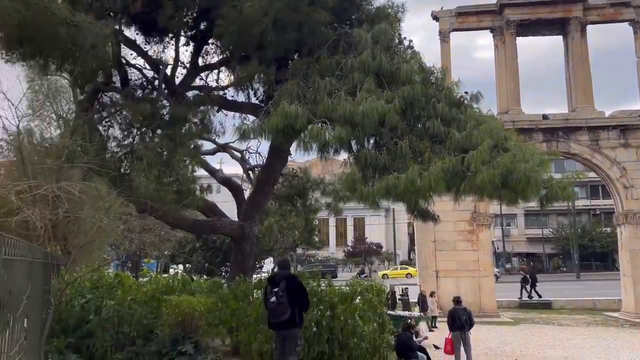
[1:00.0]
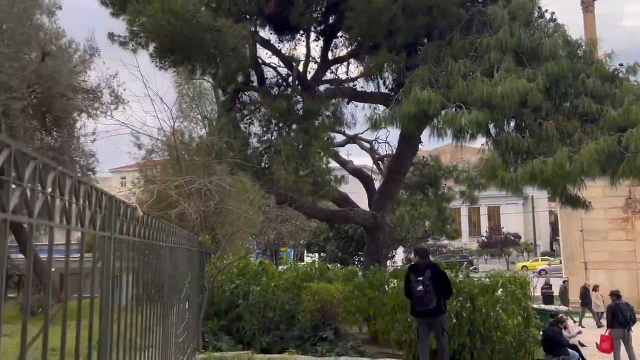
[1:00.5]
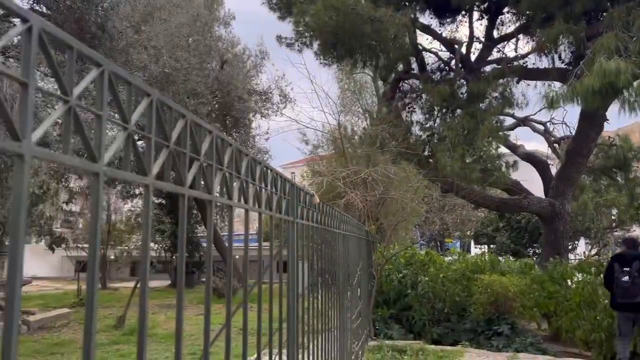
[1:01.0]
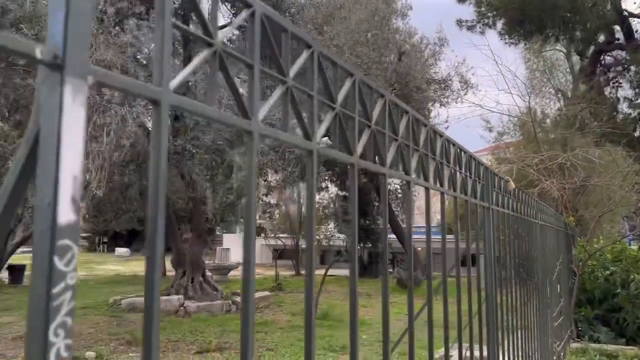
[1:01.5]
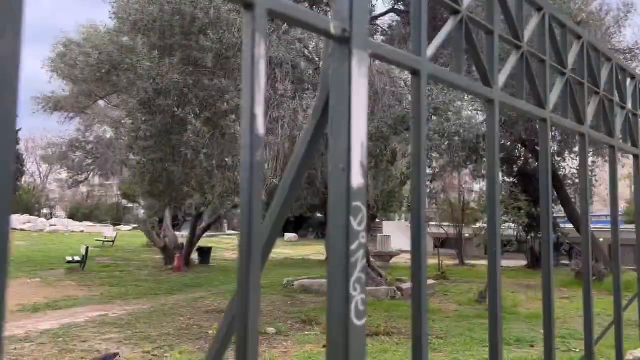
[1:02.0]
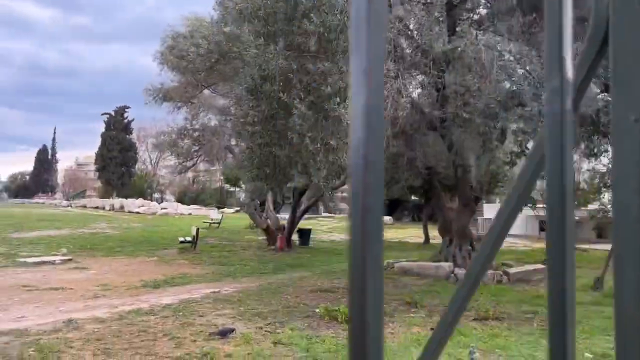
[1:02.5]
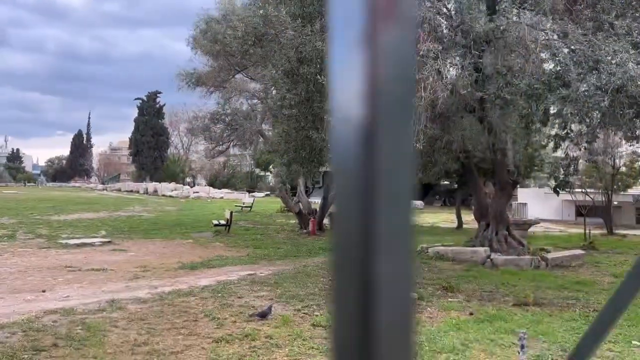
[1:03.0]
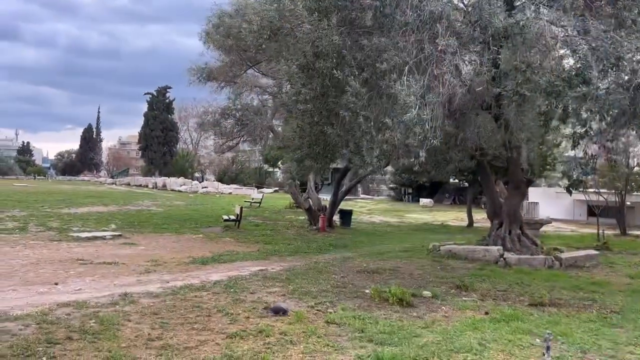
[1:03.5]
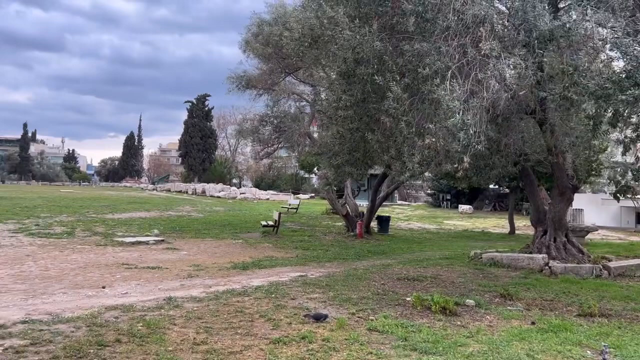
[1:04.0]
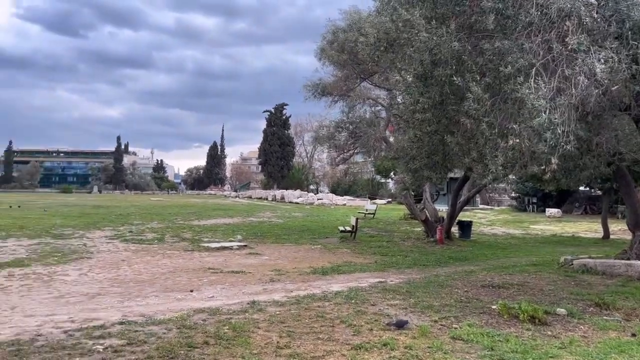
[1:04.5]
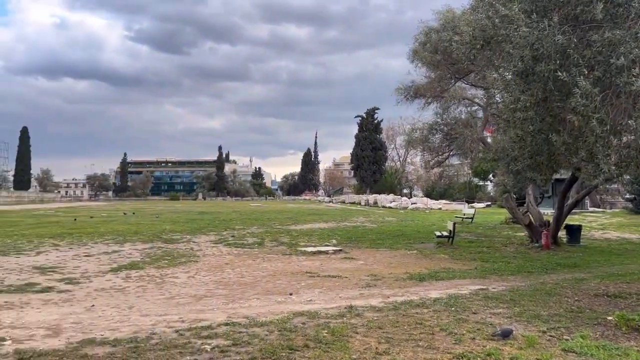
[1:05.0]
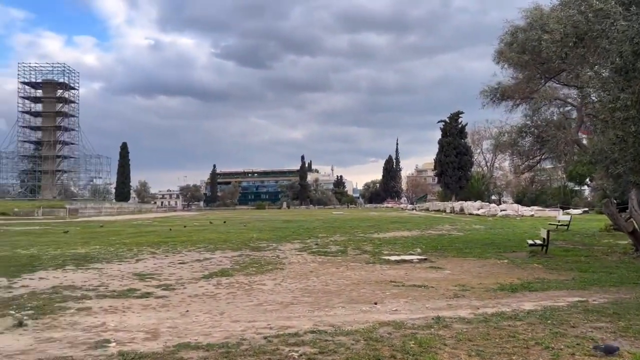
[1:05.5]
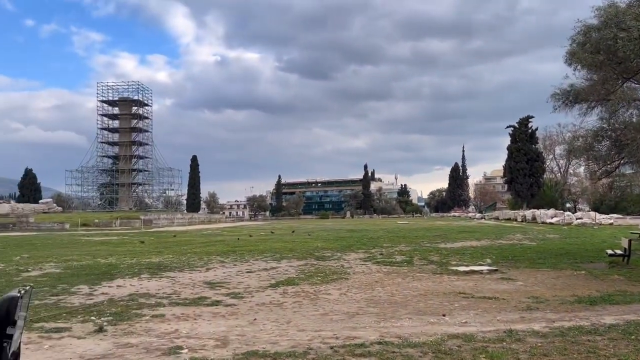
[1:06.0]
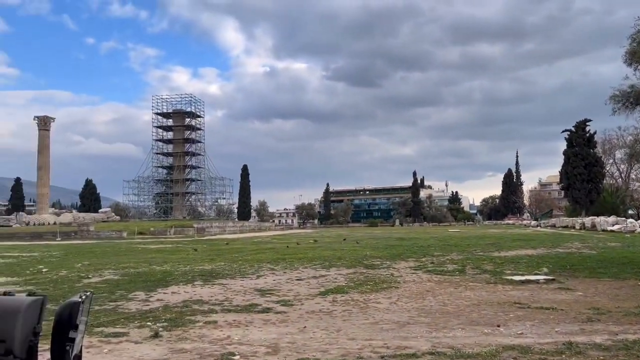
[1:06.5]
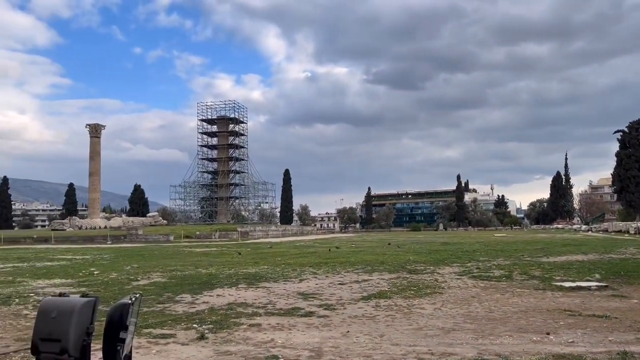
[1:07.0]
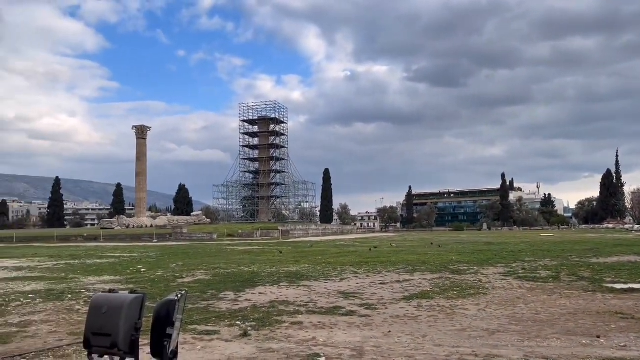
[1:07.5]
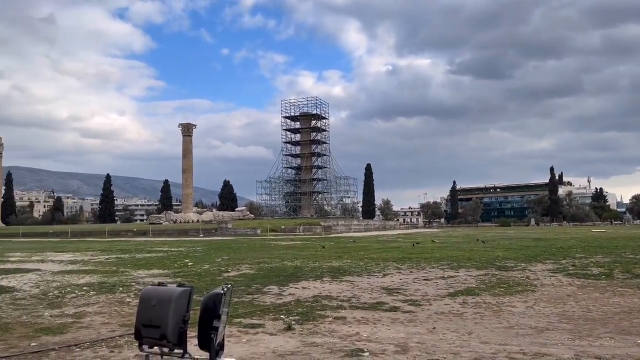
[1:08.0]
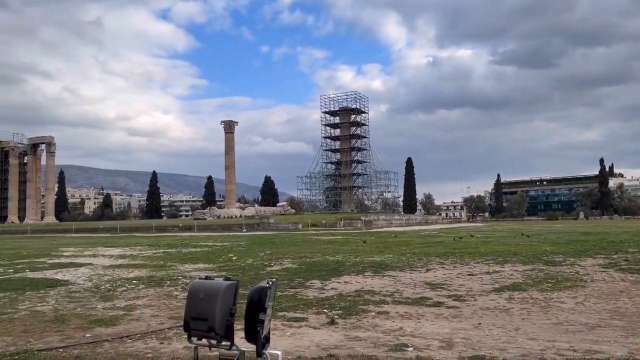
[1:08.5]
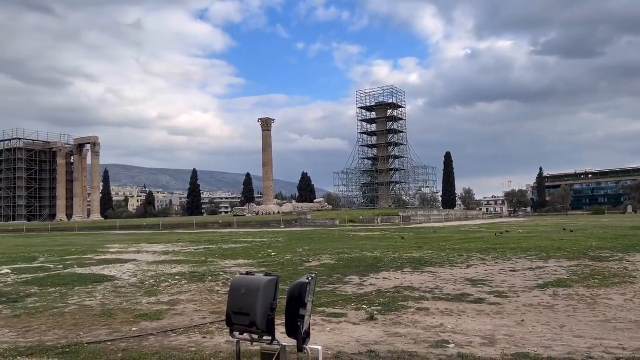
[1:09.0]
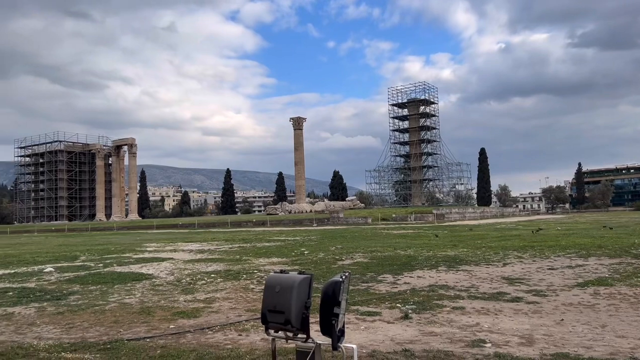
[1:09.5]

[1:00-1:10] The camera pans away from the gated ruin to show the other side of the park, which looks much more run-down. There is scaffolding, possibly around ruins that are being preserved or restored. Columns stand by themselves in the middle of a field, with scaffolding surrounding some of them, all seen from a distance, with some trees around these few columns. Two columns are sitting alone, one with scaffolding, and off to the side is a clump of three or four columns with a lot of scaffolding next to them.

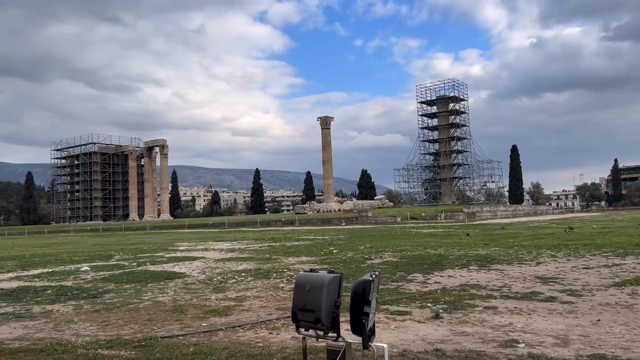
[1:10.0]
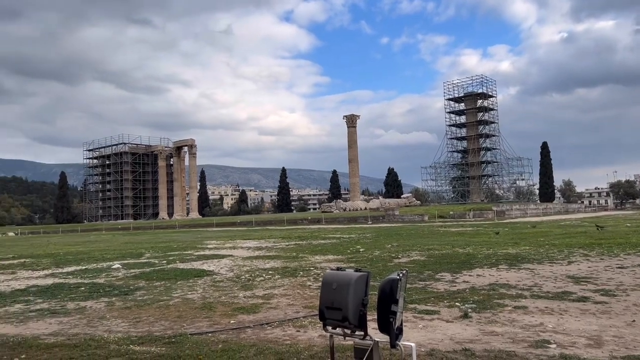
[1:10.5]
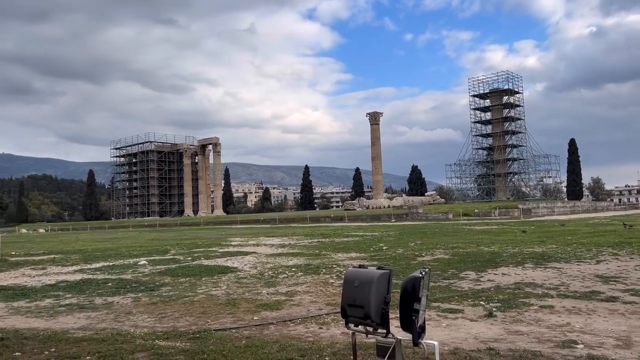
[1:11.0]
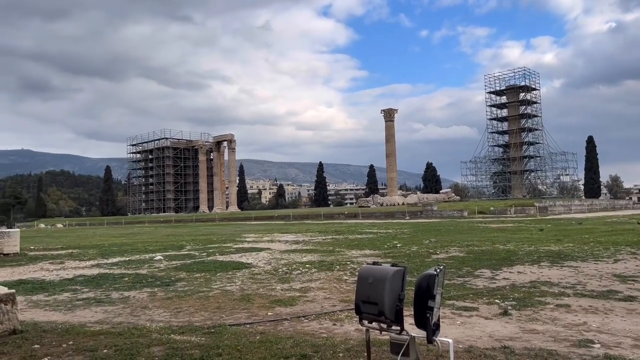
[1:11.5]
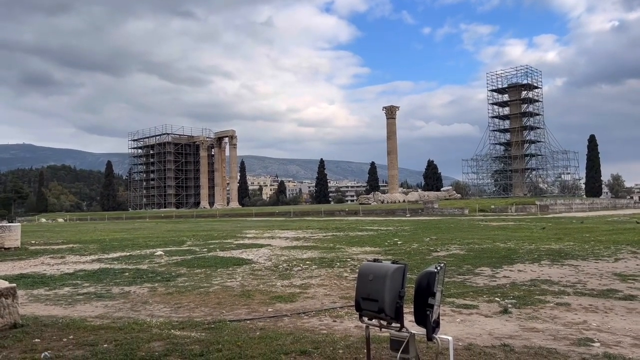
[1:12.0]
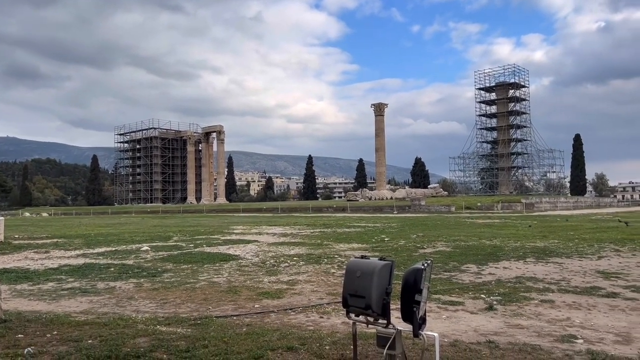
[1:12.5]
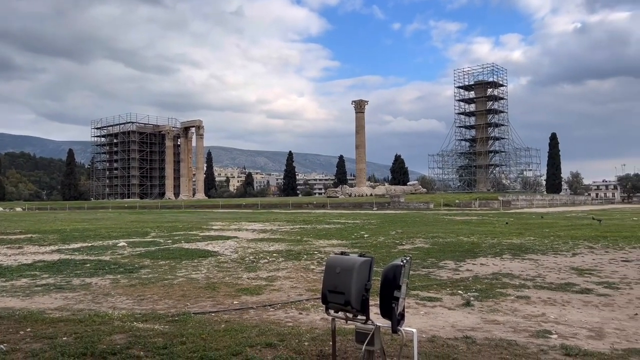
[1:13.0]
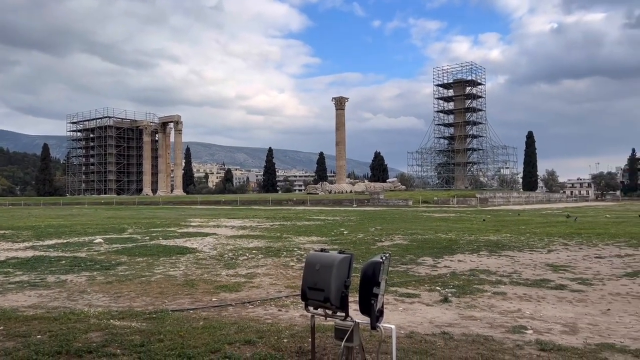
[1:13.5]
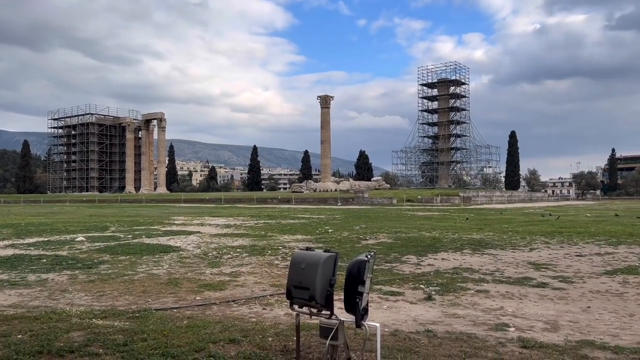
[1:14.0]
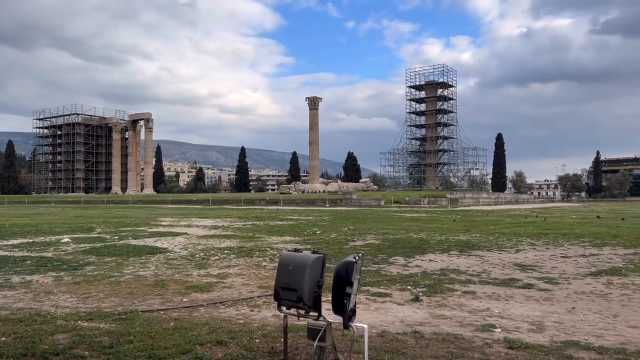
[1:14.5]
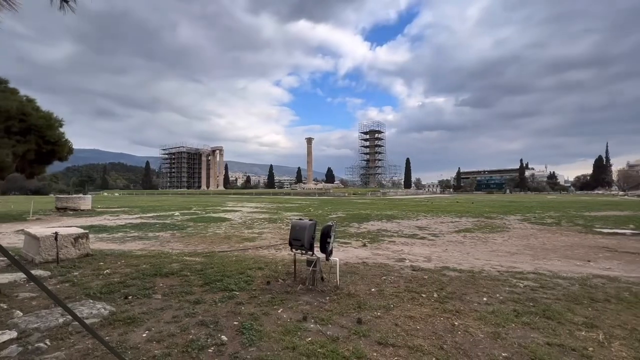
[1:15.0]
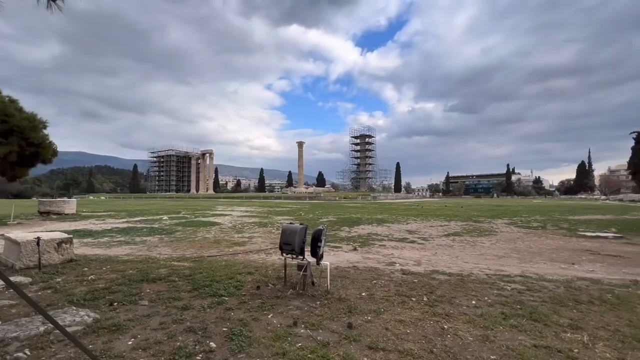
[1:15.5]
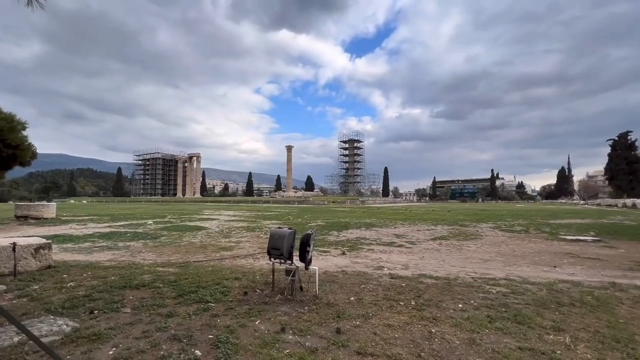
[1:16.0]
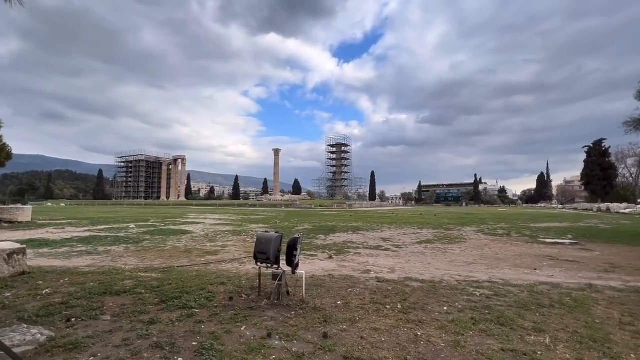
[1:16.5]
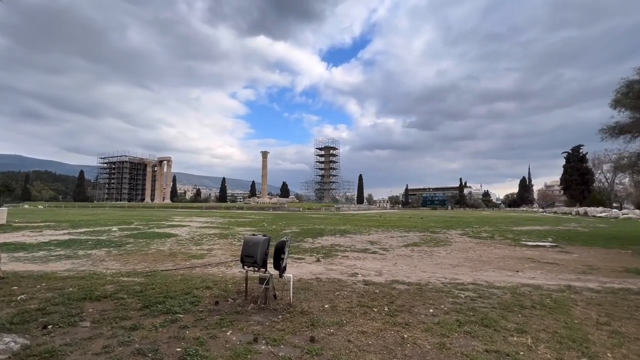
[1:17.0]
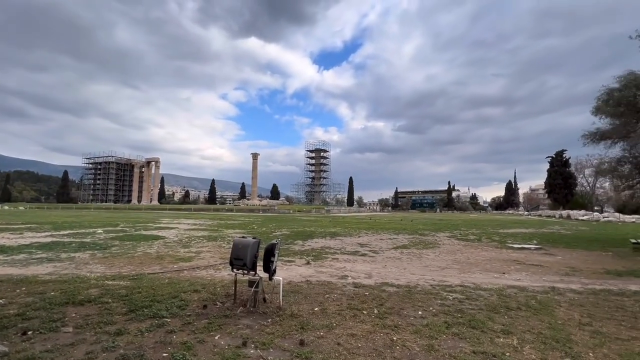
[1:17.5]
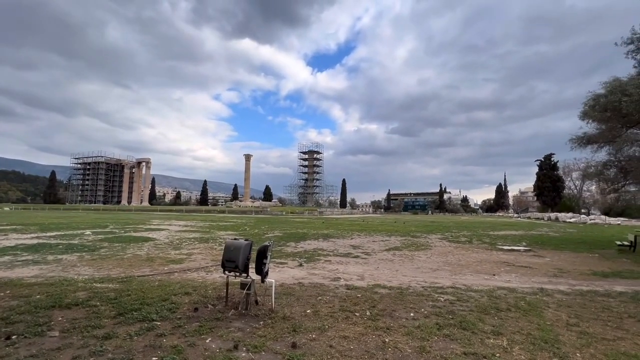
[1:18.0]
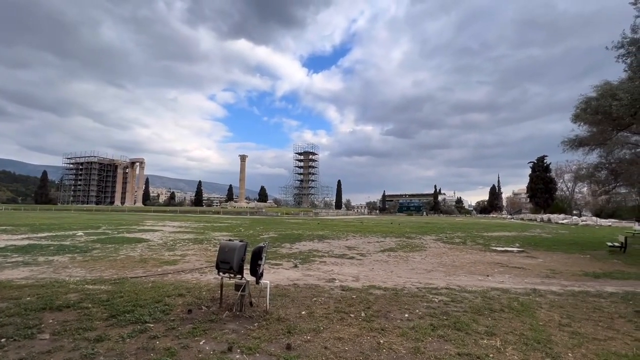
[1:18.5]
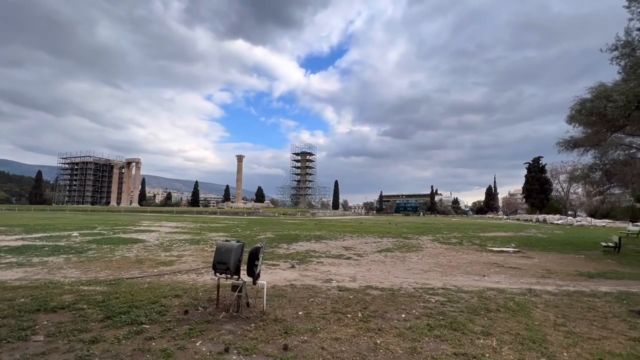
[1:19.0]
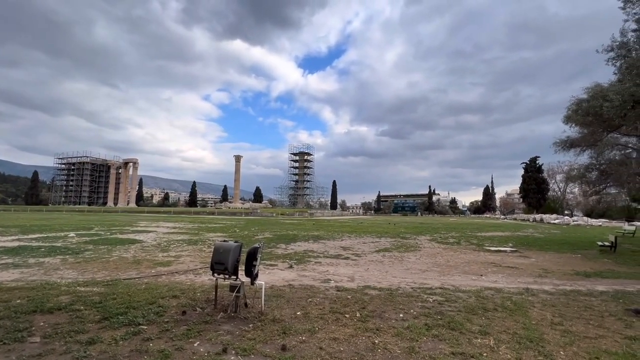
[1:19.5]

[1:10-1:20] The camera pans back and forth, showing different perspectives and moving further away from the scaffolded ruins. Pillars, apparently ancient Greek, are visible, and the view pans out further. Away from the scaffolding the area is mostly grass with many patches of dirt; the grass does not look to be in great condition, possibly from equipment driving over it, and the area may be undergoing reconstruction. It looks like a tourist area for touring ruins. There are lots of white clouds in the sky with a little blue sky poking through.